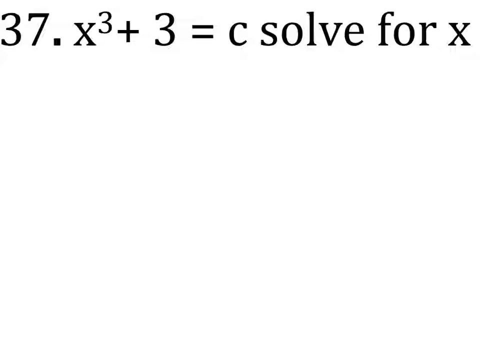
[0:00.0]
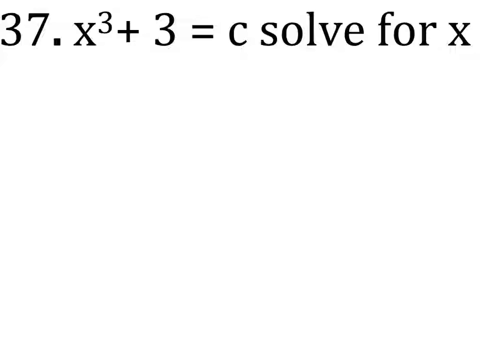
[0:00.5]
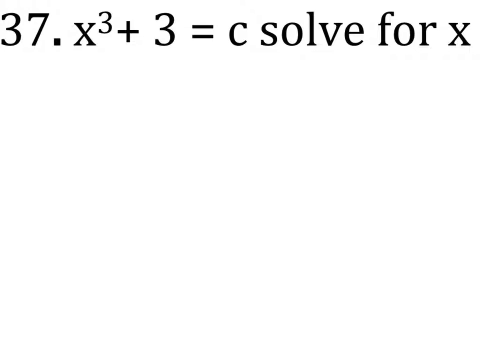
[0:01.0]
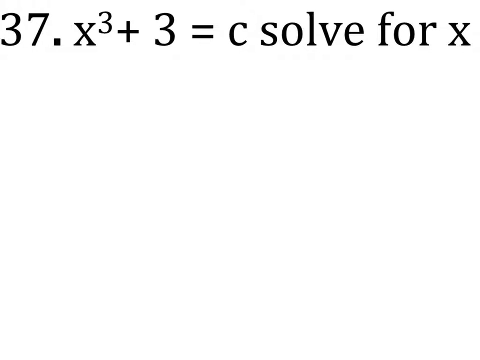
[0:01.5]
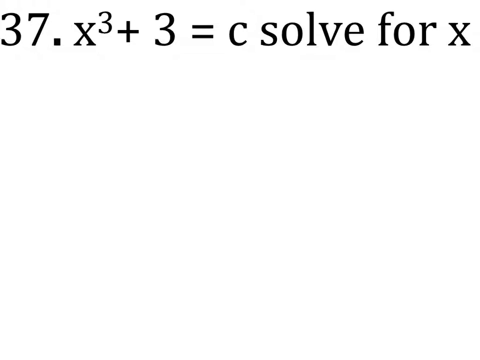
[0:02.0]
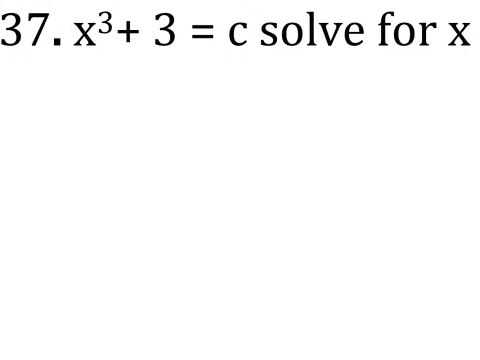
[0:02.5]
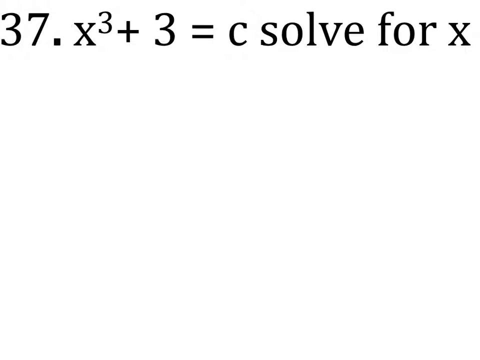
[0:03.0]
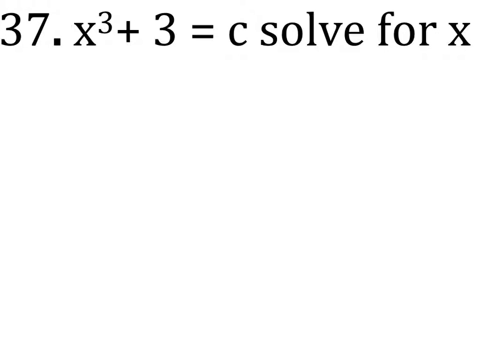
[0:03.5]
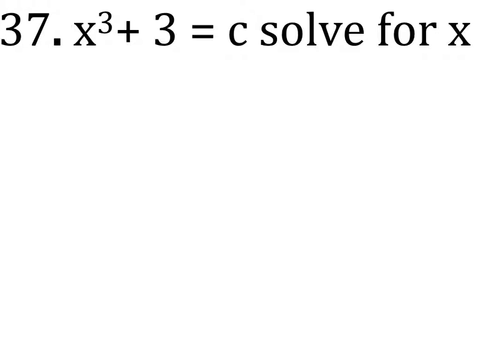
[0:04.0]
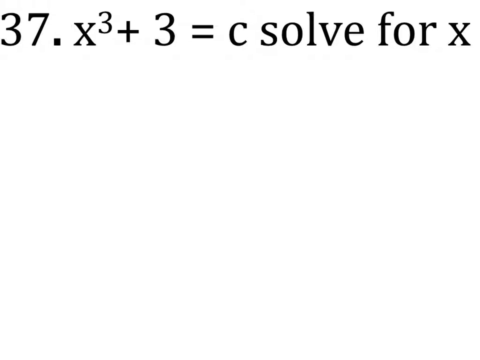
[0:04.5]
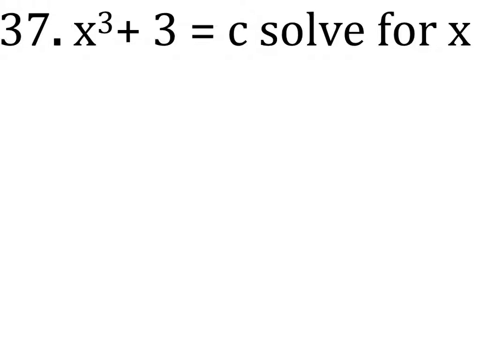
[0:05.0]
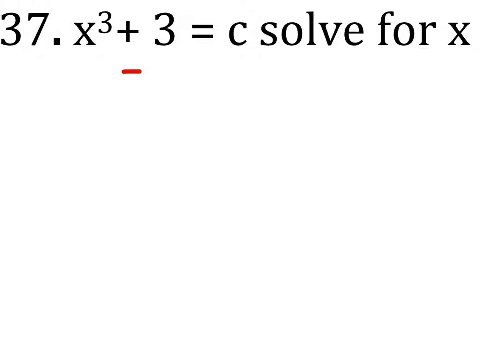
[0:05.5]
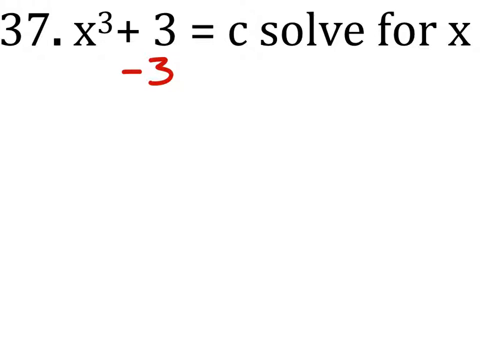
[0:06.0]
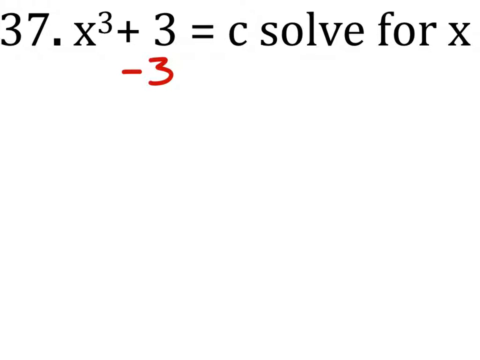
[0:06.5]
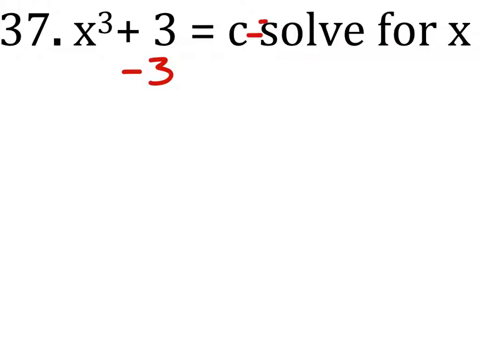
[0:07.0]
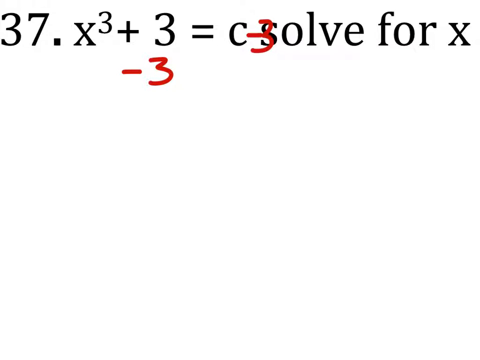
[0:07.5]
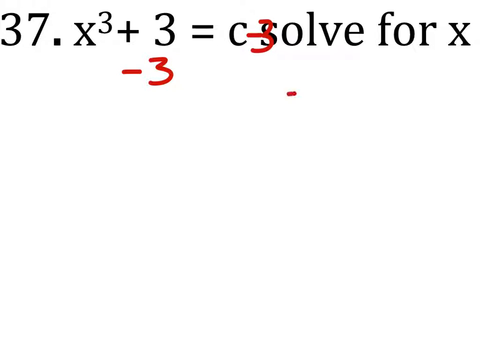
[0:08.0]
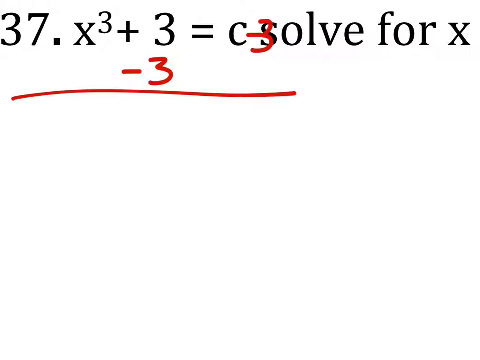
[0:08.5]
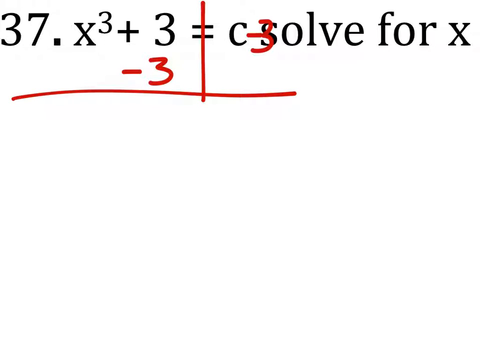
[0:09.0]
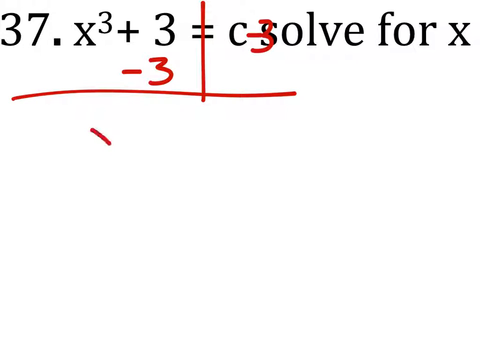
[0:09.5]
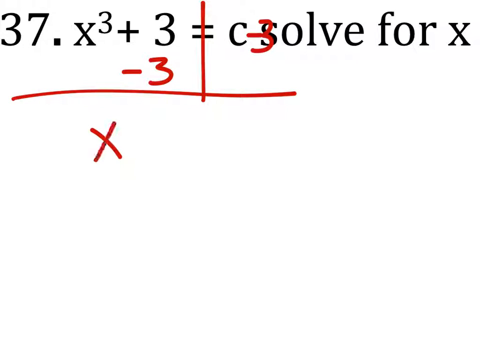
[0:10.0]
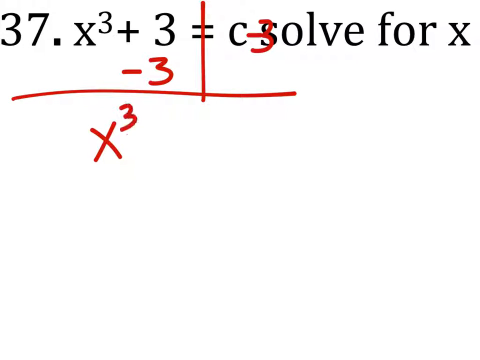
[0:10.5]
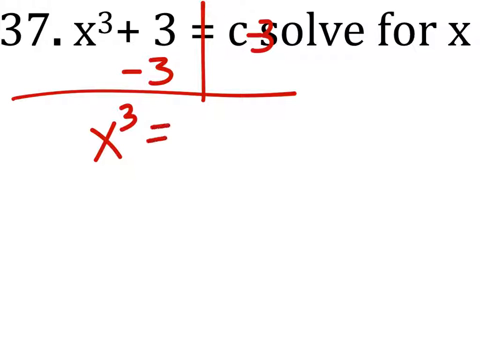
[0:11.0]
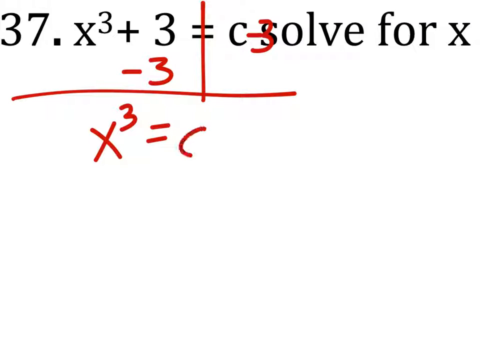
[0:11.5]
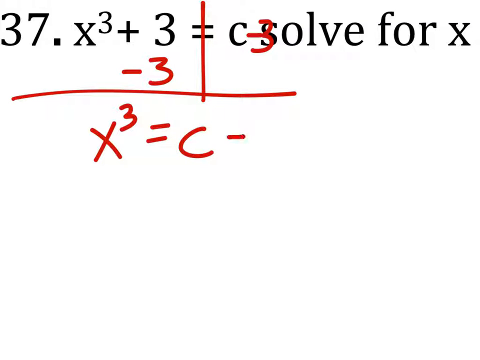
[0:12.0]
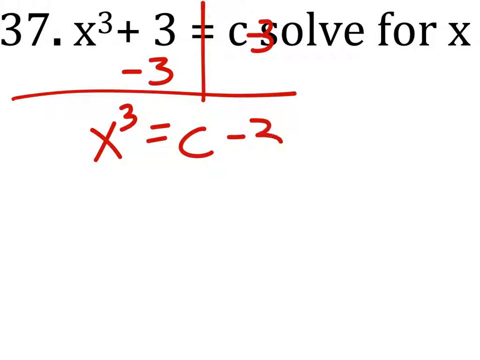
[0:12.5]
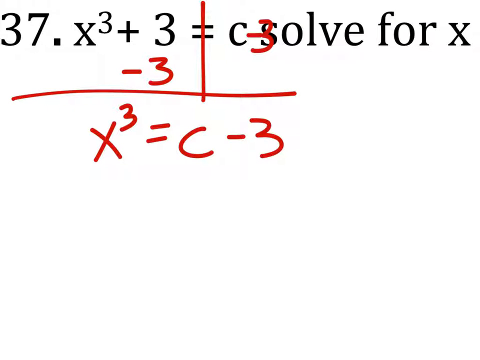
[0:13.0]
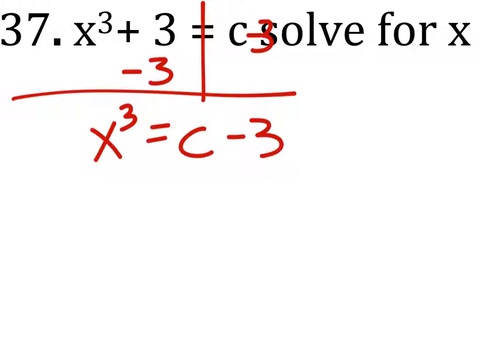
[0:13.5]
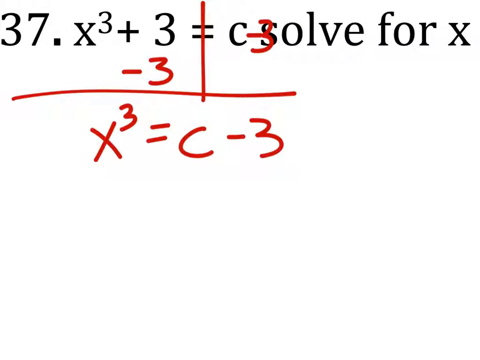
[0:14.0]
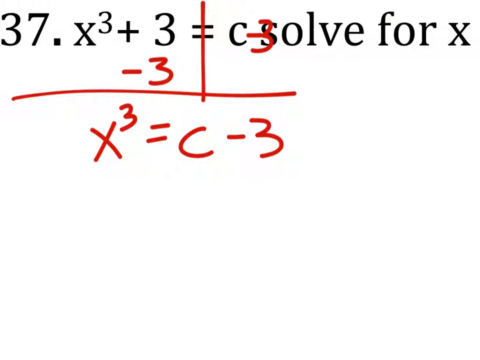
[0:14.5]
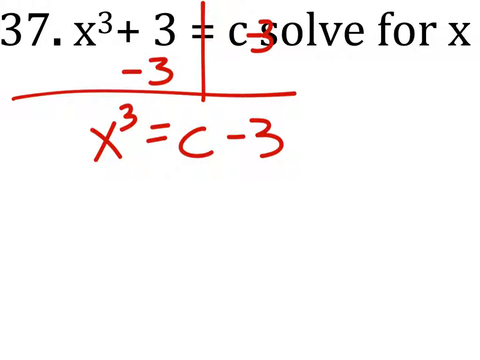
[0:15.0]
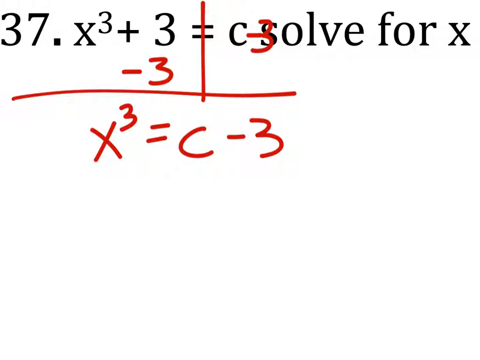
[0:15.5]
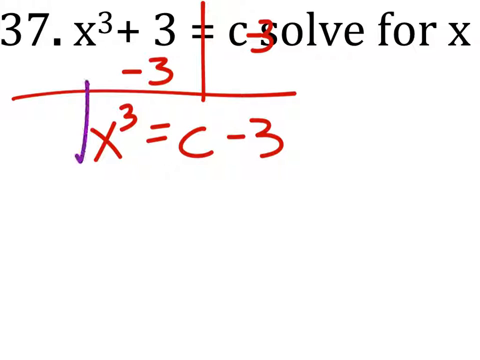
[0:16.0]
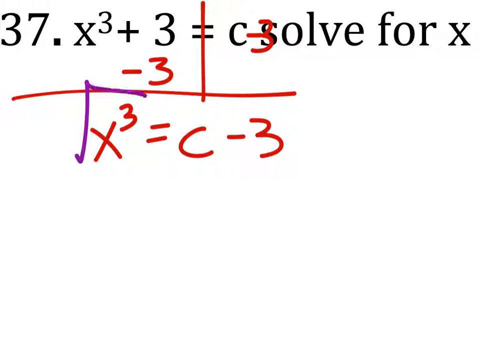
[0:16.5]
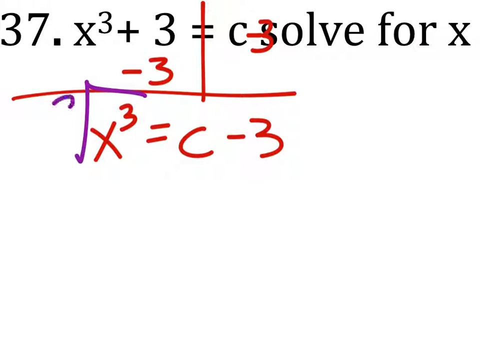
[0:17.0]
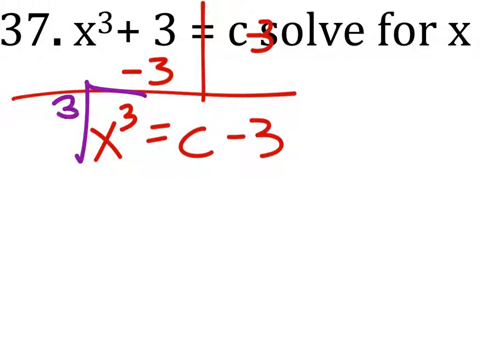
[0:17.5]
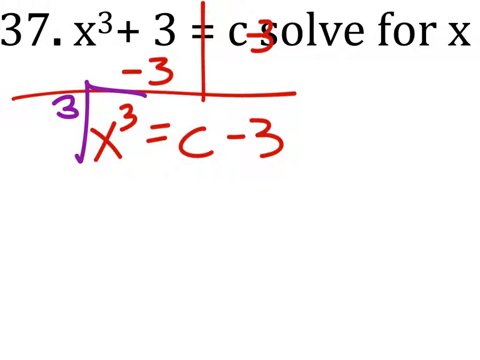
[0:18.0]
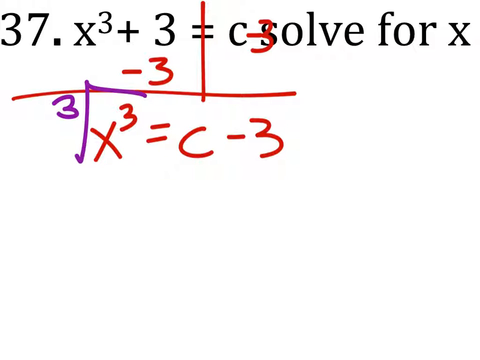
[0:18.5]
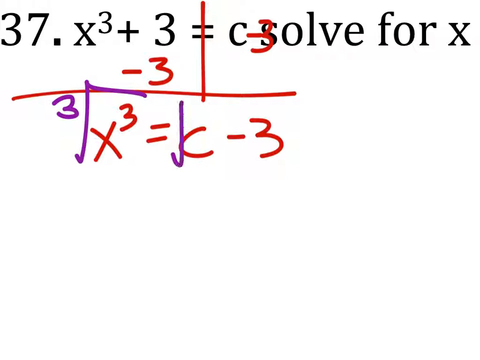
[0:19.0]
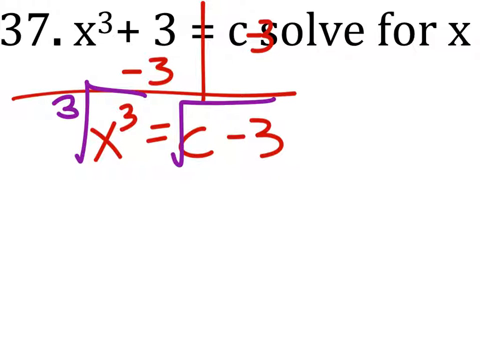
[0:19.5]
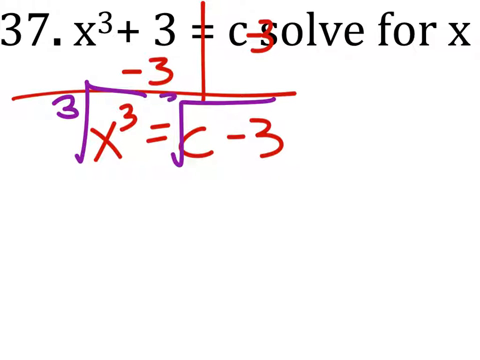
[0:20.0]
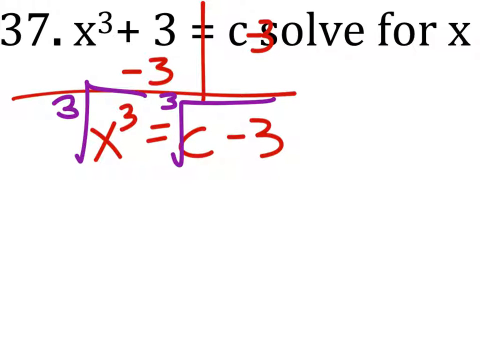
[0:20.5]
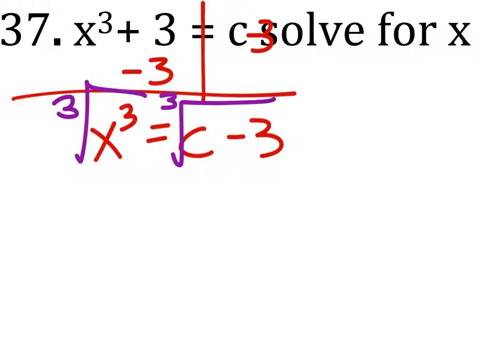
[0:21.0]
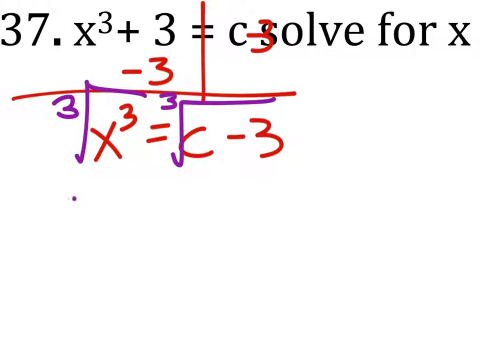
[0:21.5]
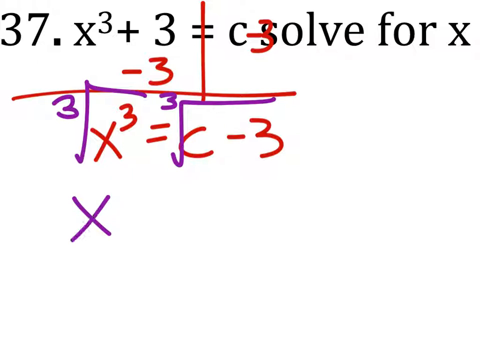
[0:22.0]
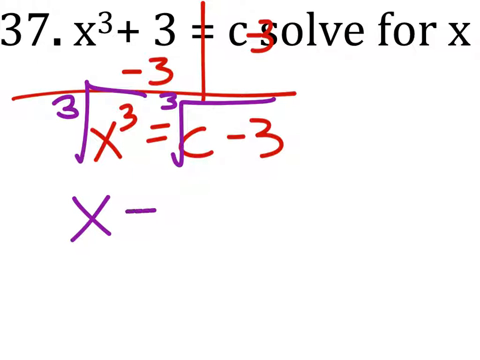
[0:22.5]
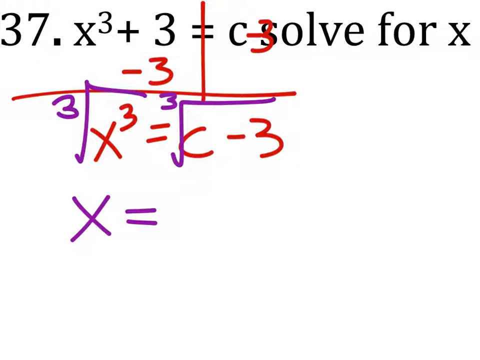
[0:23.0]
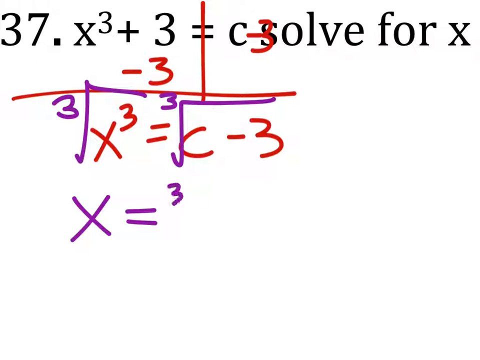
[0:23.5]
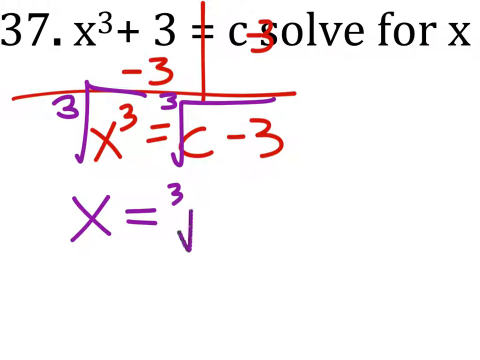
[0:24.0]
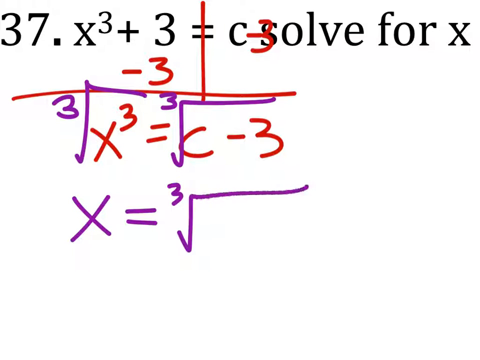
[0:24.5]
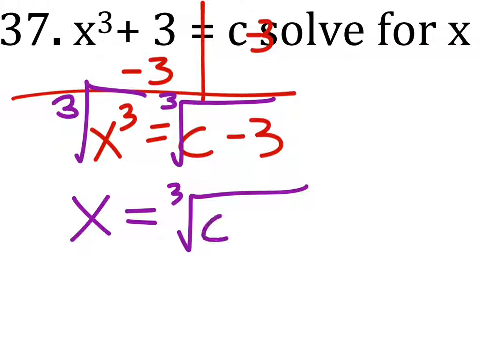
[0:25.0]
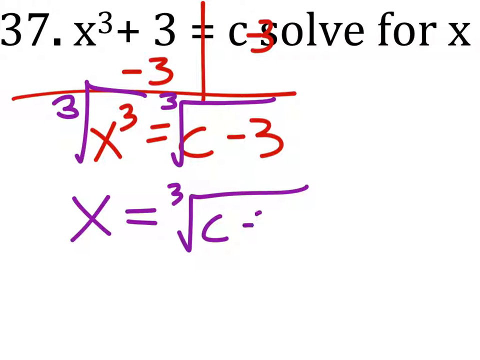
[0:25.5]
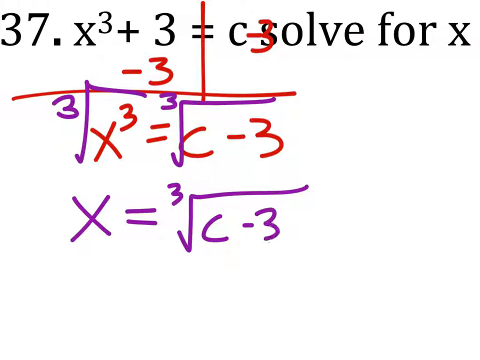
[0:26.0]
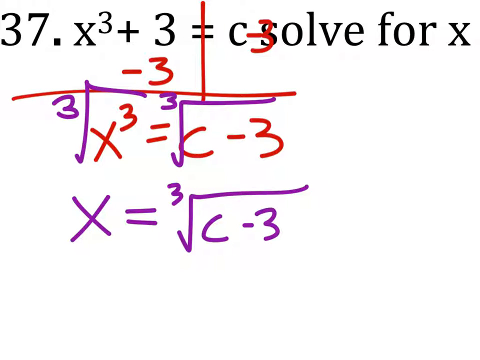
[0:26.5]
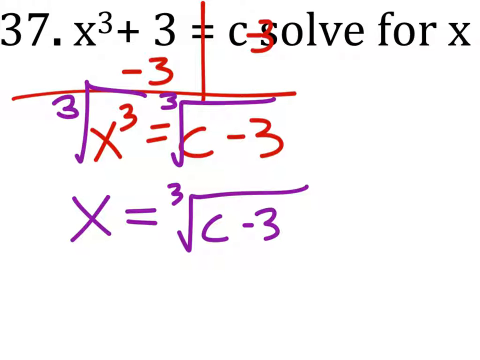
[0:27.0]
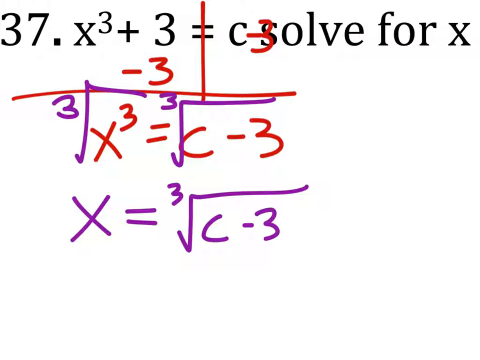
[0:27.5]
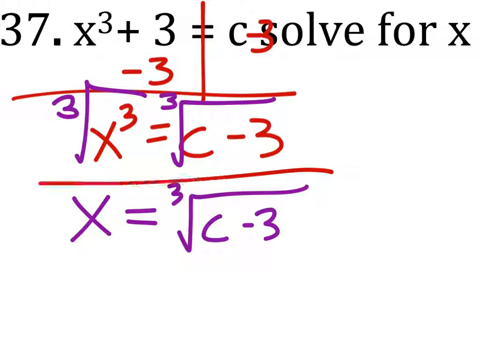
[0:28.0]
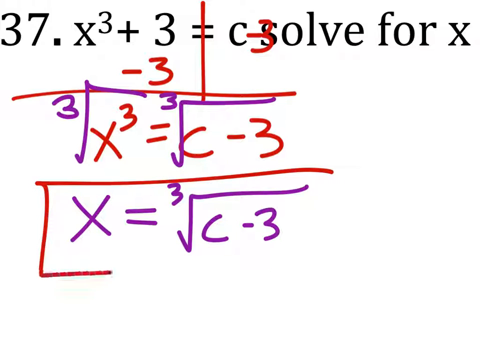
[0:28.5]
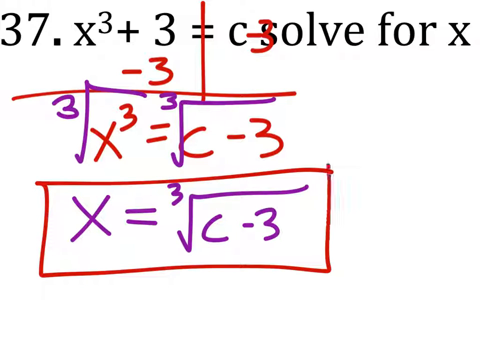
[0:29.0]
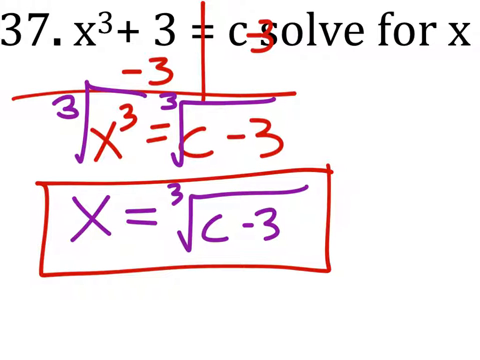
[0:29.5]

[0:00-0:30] The video begins by showing the mathematical problem to be solved, question 37: x cubed plus 3 is equal to c. The solution first subtracts 3 from both sides of the equation, leaving x cubed equal to c minus 3, following the rule that whatever is done on one side is done on the other. To solve for x, the cube root is taken of both sides: the cube root of x cubed is x, and the cube root of the right-hand side is the cube root of c minus 3. The answer is x equals the cube root of c minus 3.